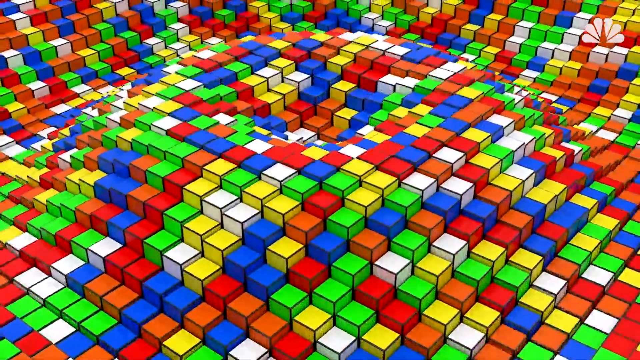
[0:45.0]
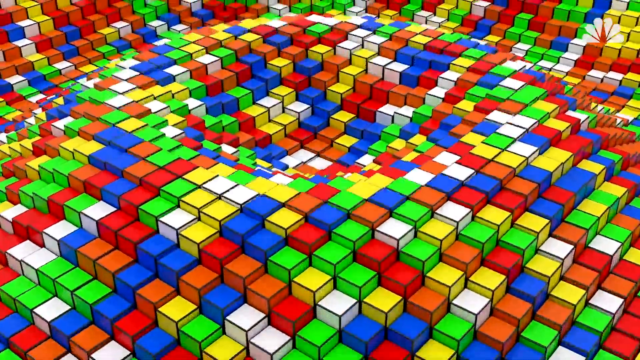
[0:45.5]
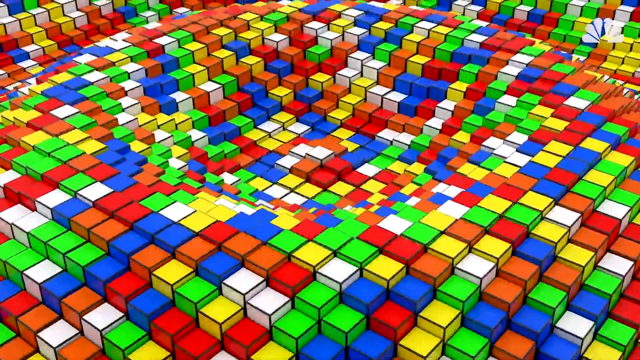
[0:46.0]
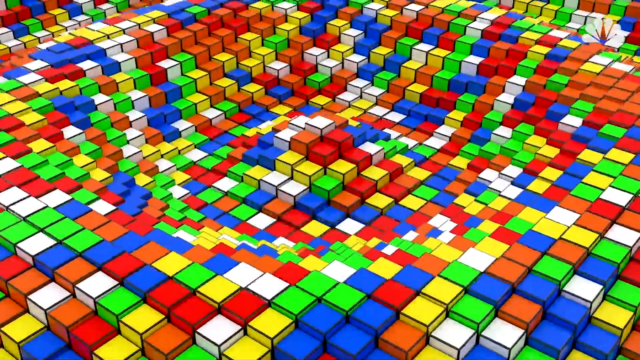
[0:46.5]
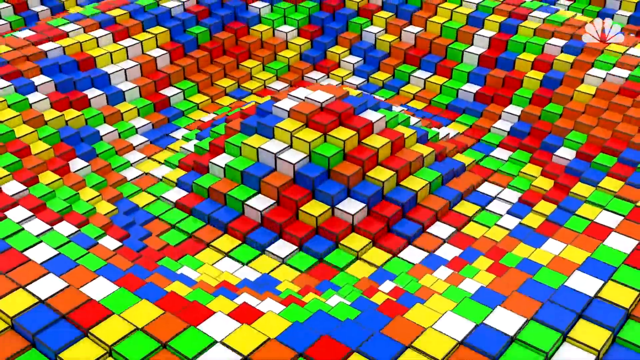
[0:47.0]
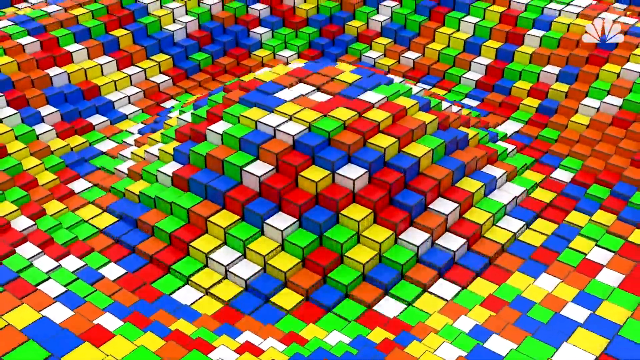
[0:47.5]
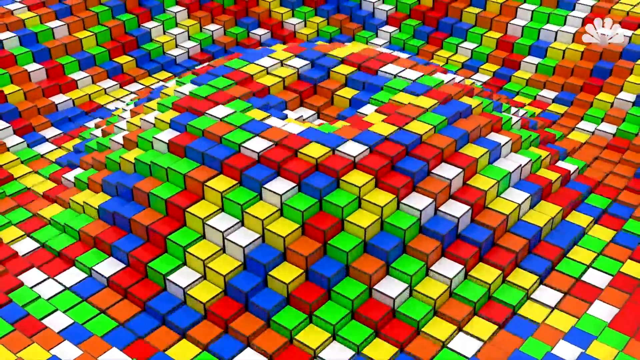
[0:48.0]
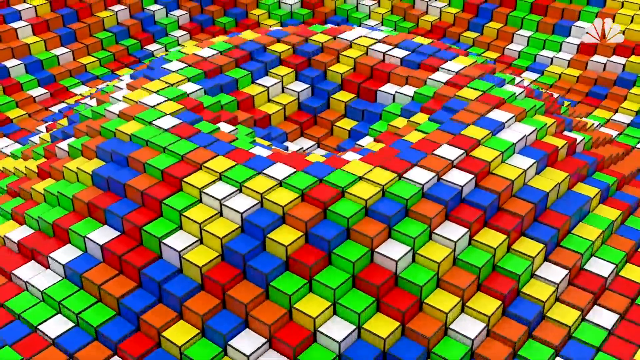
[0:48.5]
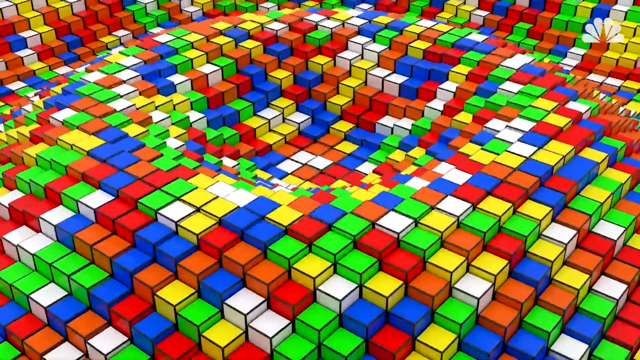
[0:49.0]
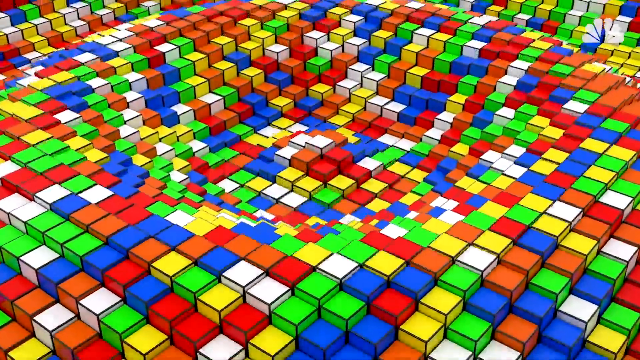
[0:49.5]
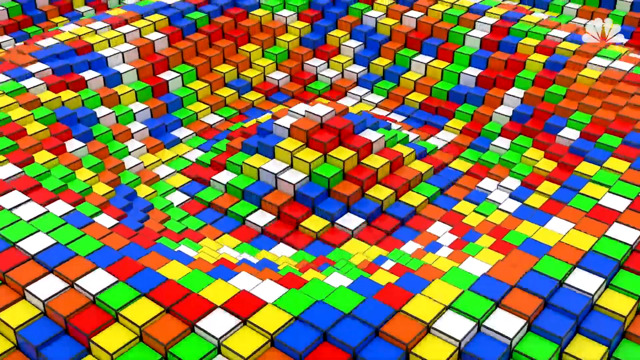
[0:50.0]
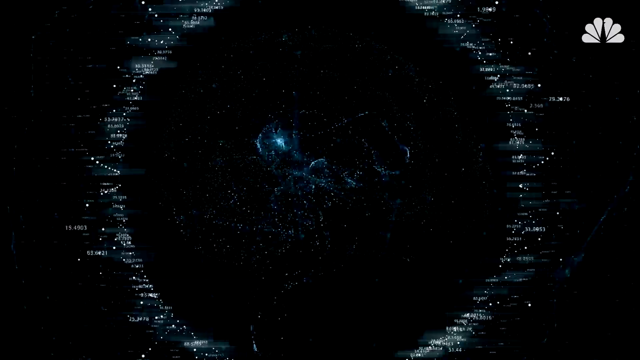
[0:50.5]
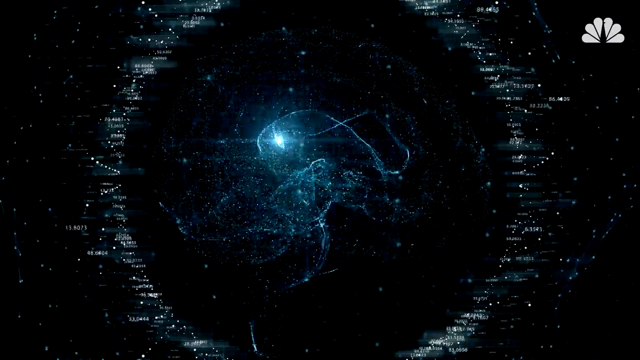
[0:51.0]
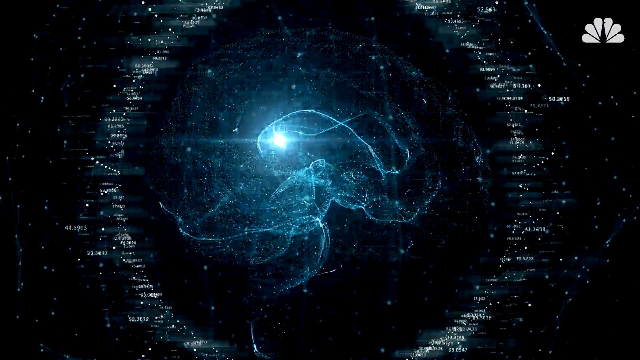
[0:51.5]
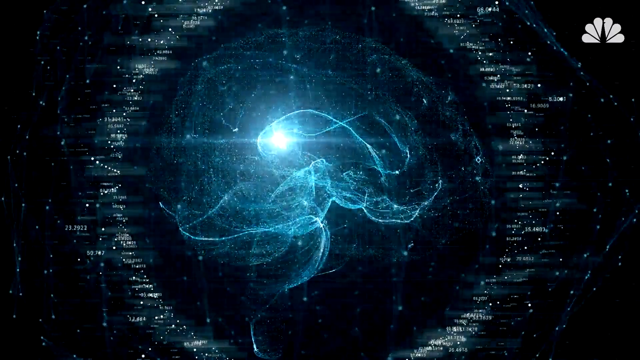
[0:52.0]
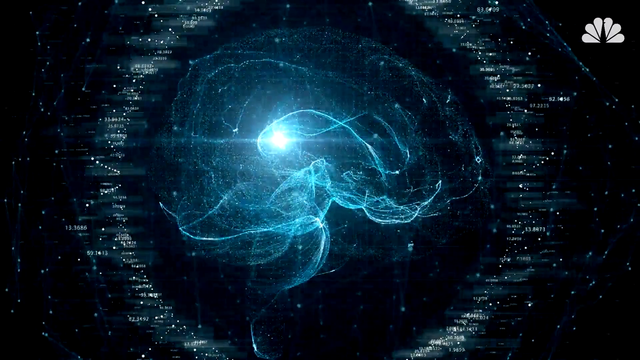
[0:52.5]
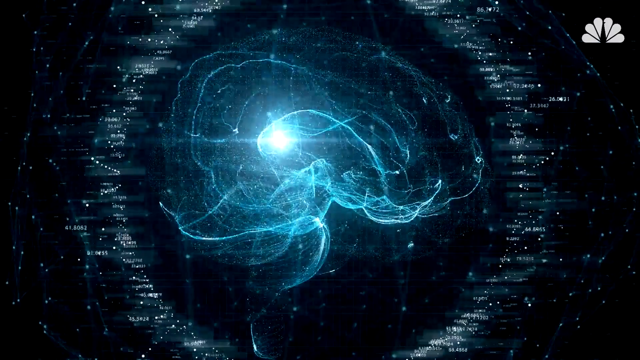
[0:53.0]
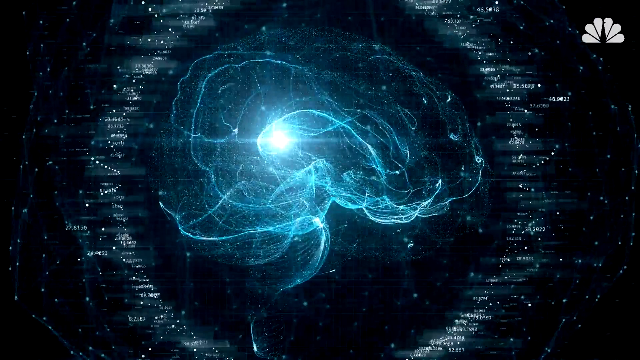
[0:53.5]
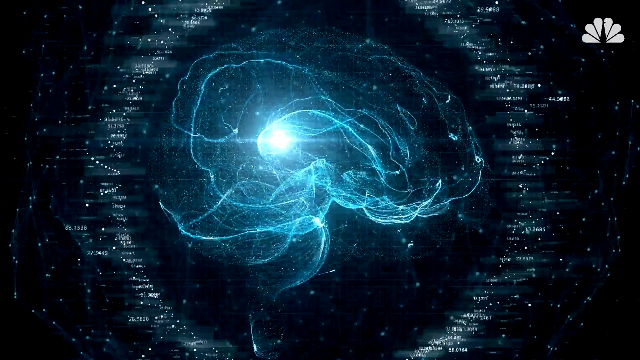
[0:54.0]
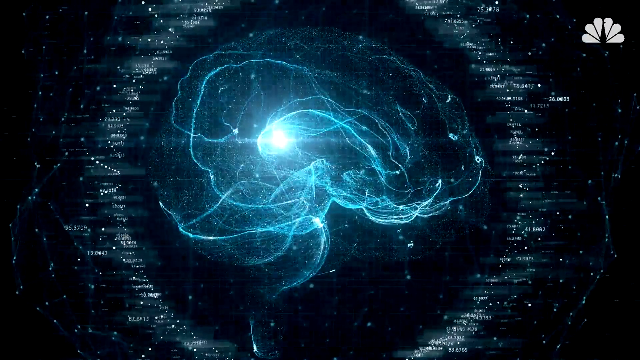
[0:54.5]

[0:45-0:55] The Rubik's Cube graphic of multicolored cubes undulates in waves starting in the center and going out, the cubes almost like little bar graphs moving up and down. The video cuts to a cosmic, astrological-looking graphic with a dark blue background and a lighter blue illuminated center. Lots of tiny dots and lines move around, almost like a nighttime sky. Just off center, a little up from the center, a very bright light grows very bright with blue light radiating from it. Numbers and letters, mostly numbers, are arranged in a circular dot pattern around the center graphic, almost like a constellation, moving and changing.